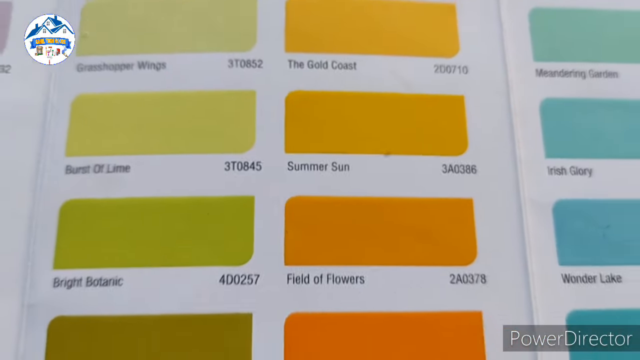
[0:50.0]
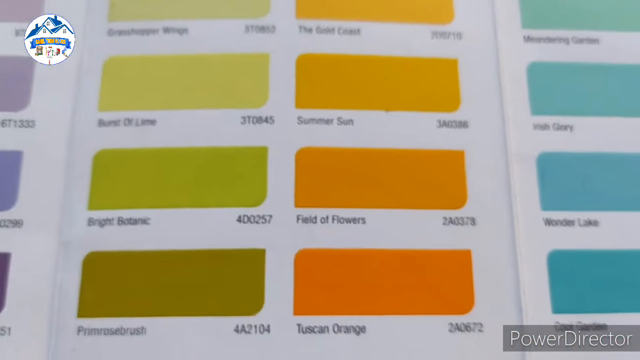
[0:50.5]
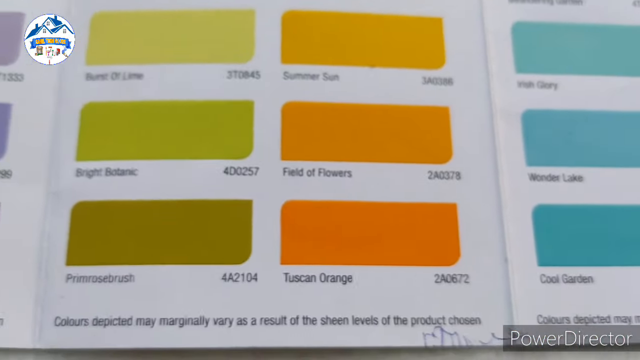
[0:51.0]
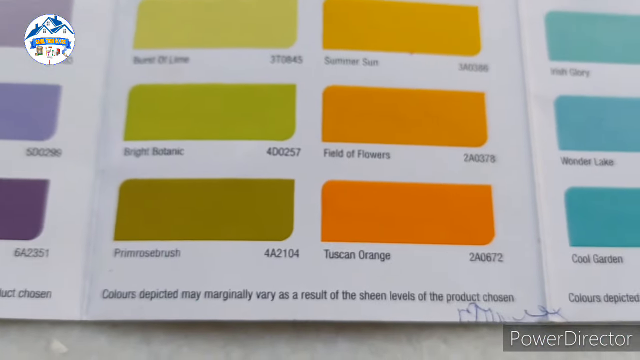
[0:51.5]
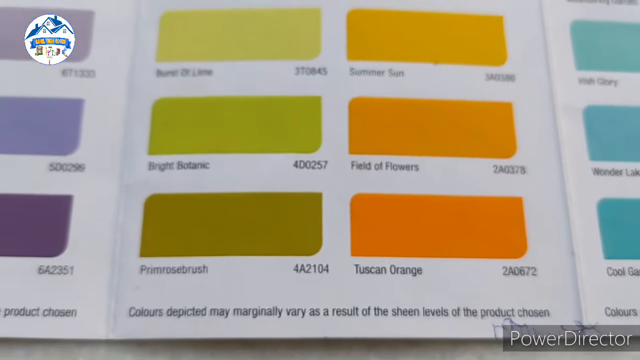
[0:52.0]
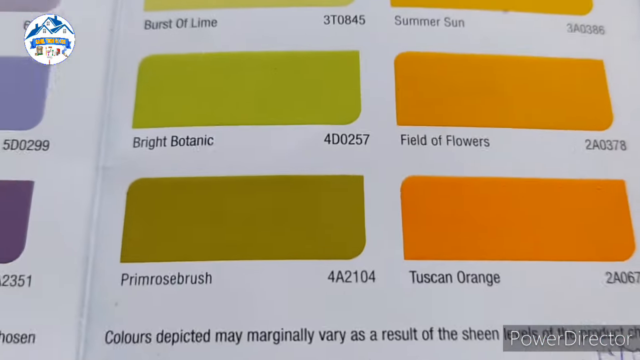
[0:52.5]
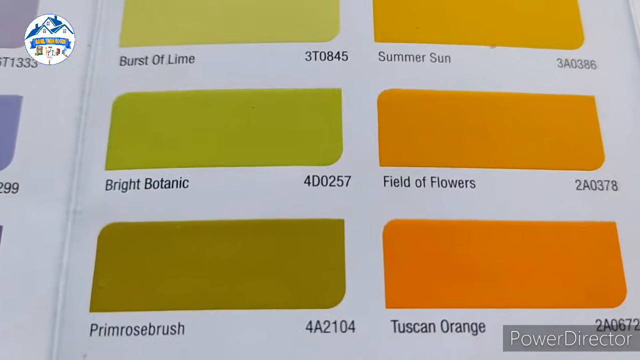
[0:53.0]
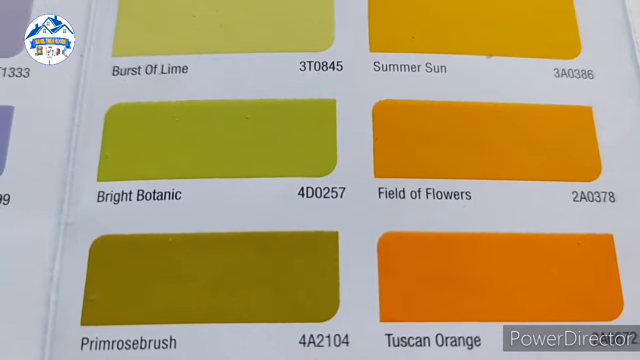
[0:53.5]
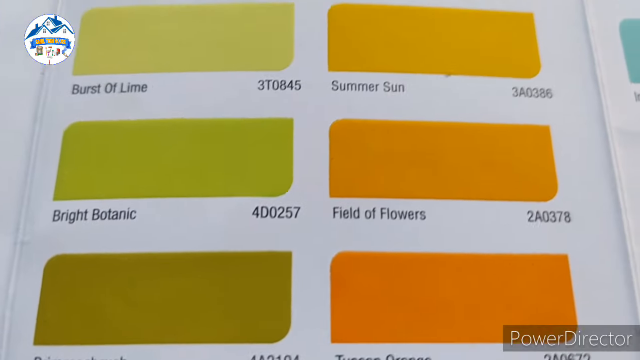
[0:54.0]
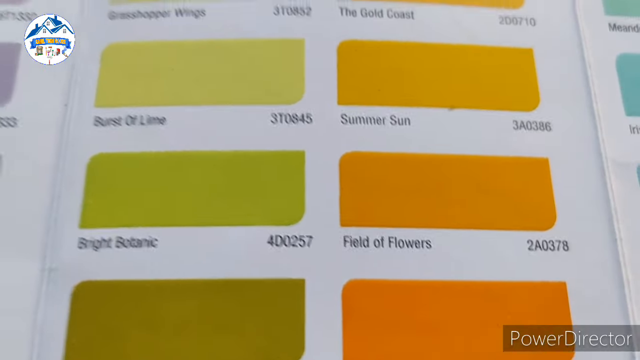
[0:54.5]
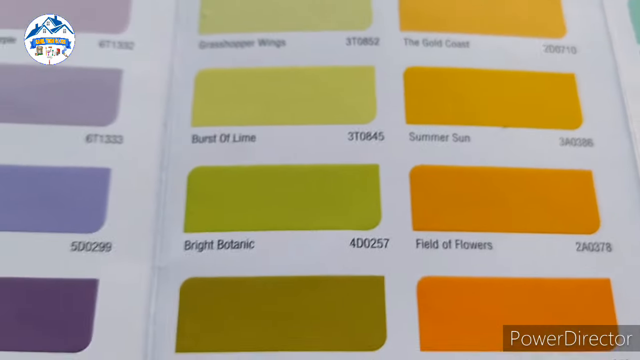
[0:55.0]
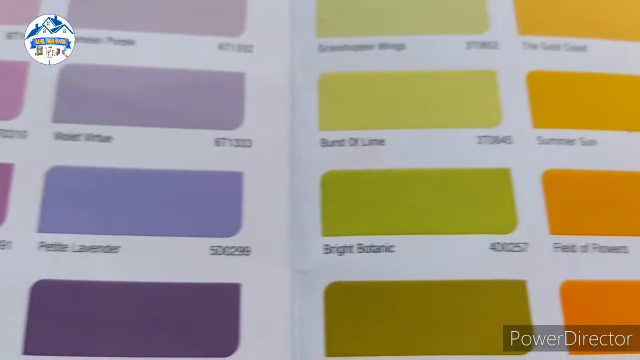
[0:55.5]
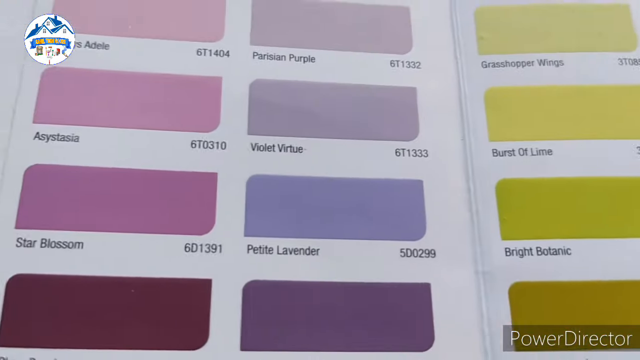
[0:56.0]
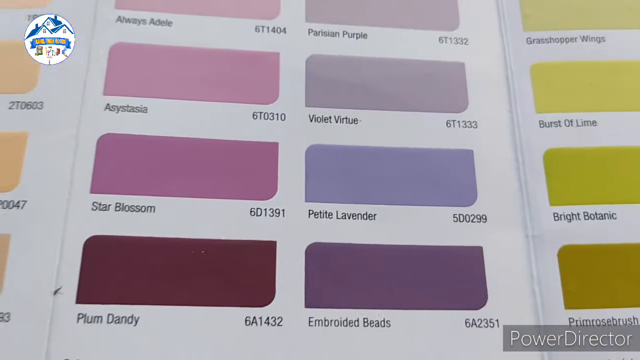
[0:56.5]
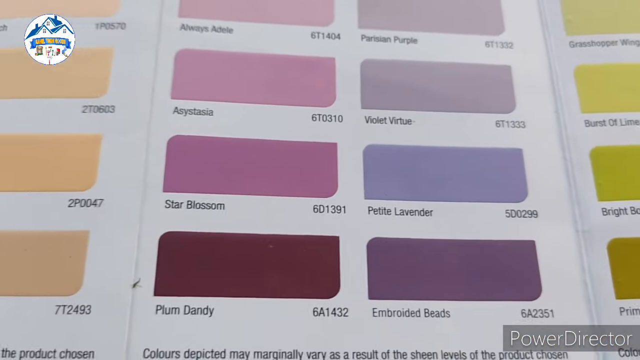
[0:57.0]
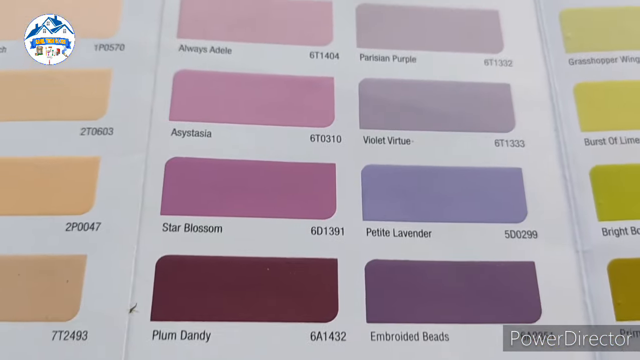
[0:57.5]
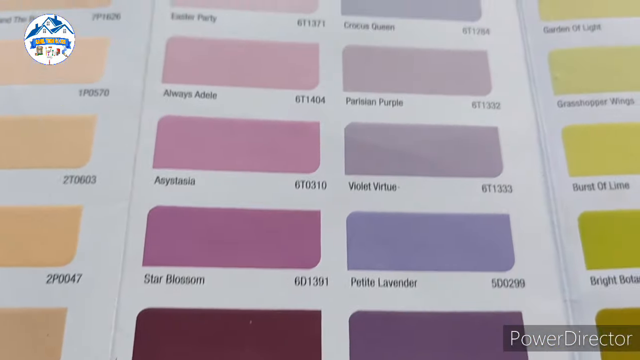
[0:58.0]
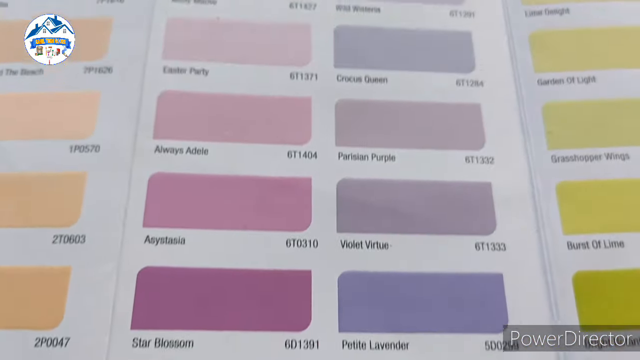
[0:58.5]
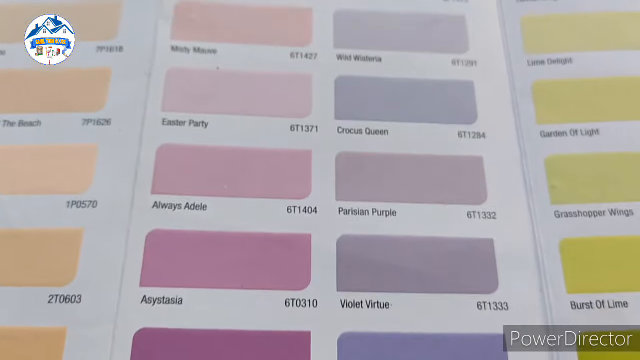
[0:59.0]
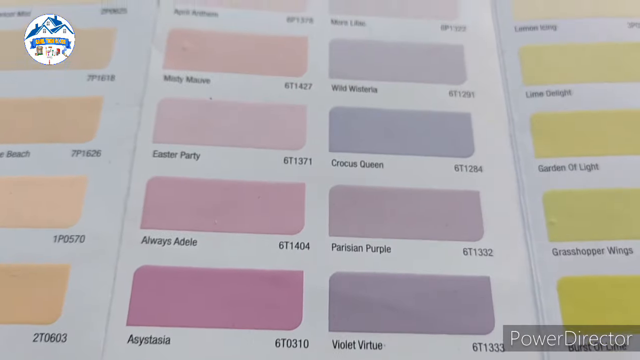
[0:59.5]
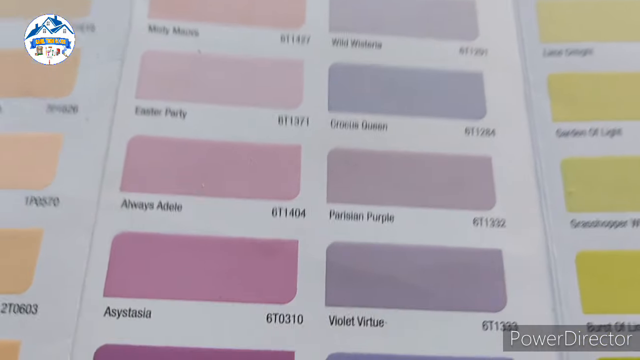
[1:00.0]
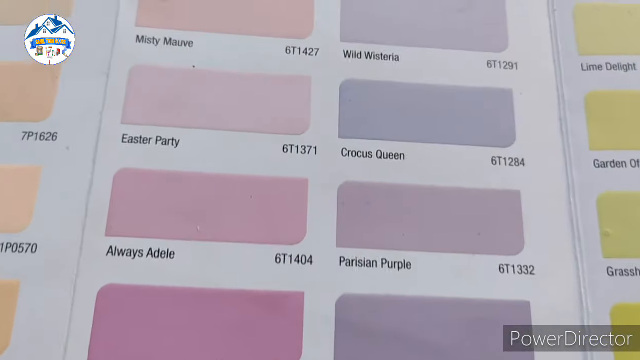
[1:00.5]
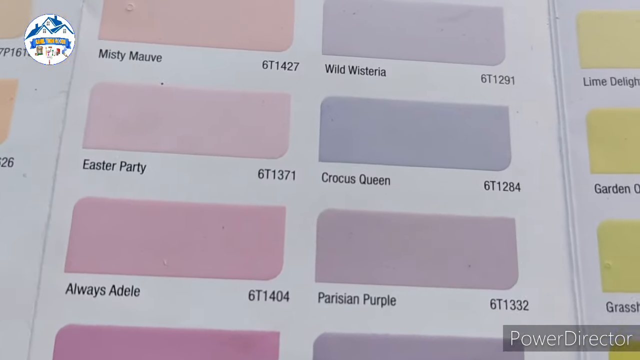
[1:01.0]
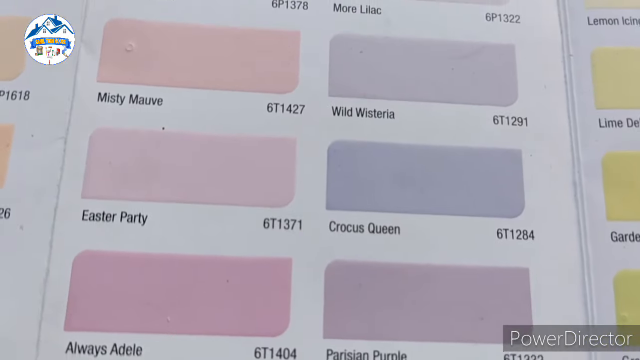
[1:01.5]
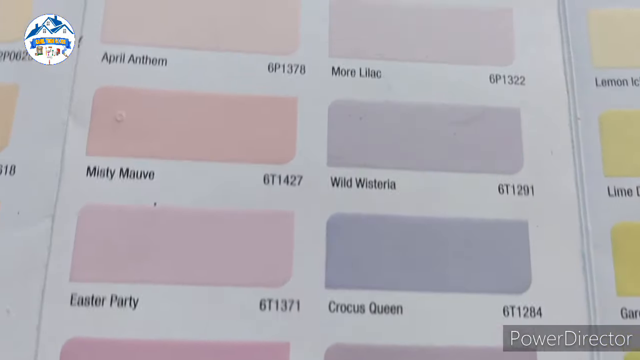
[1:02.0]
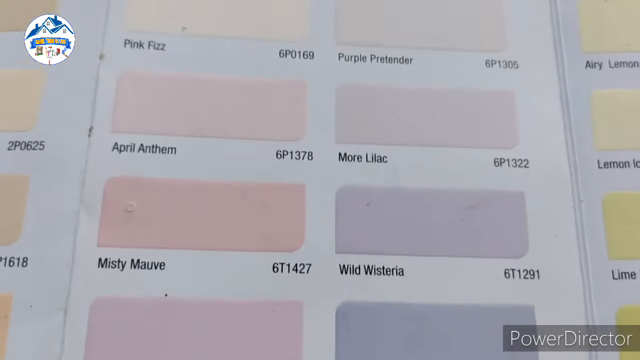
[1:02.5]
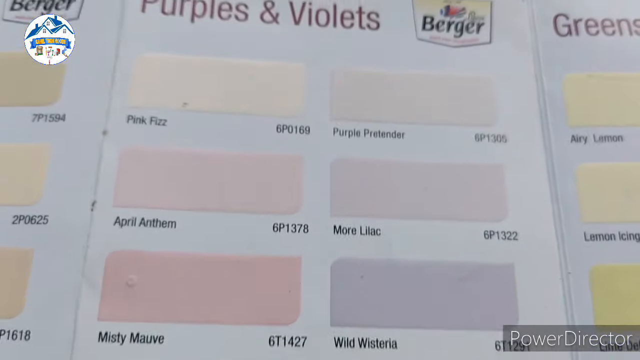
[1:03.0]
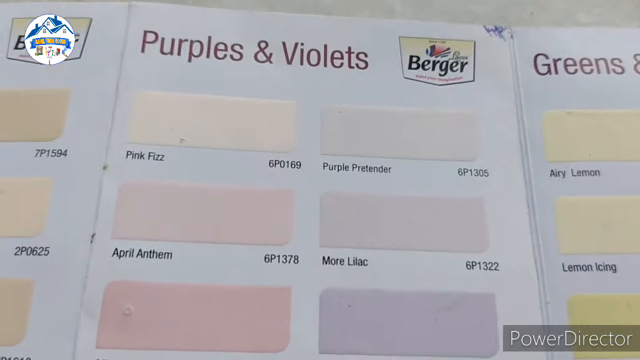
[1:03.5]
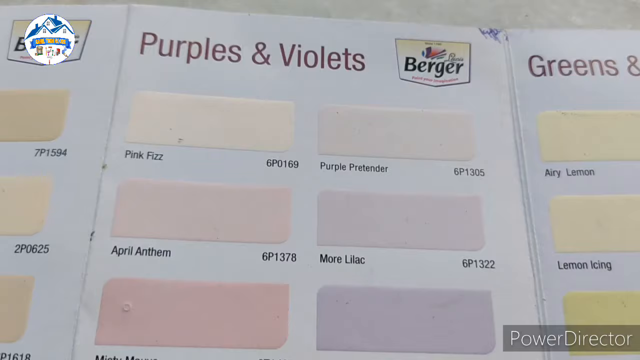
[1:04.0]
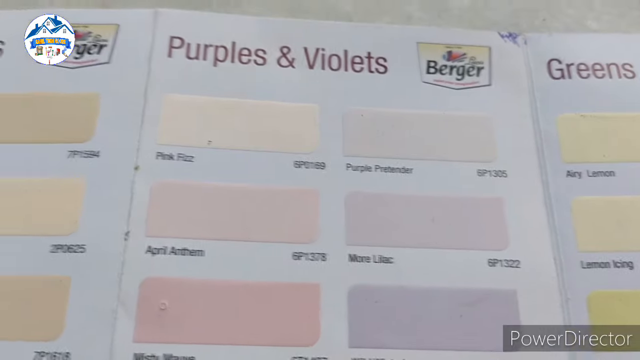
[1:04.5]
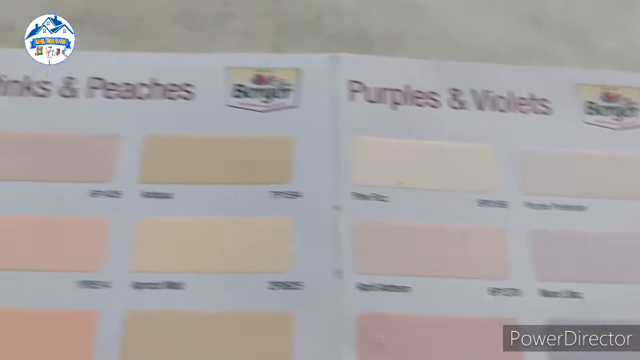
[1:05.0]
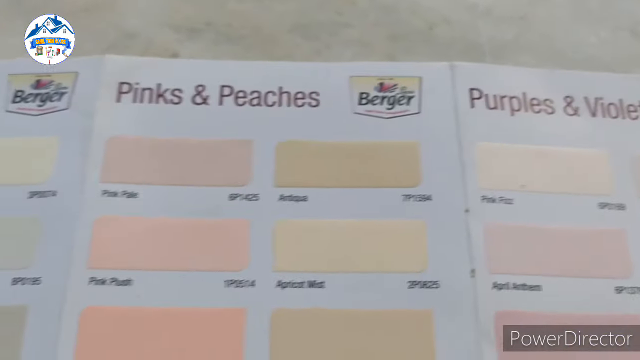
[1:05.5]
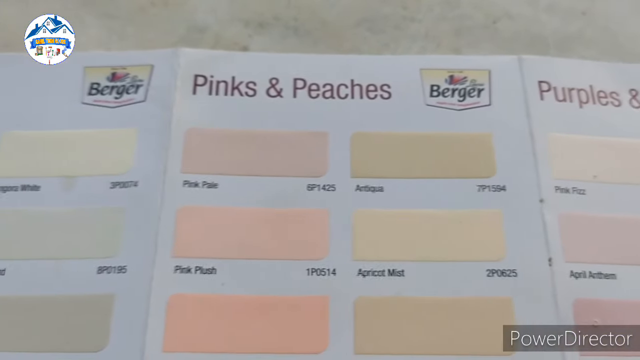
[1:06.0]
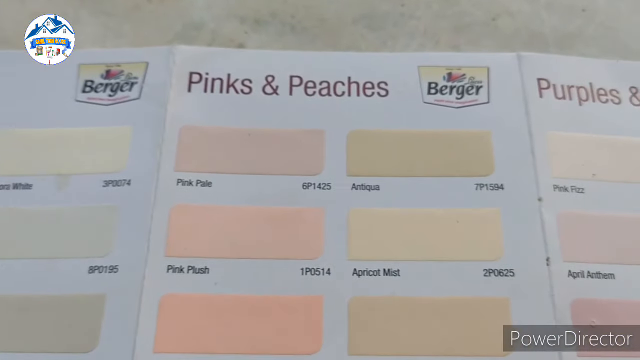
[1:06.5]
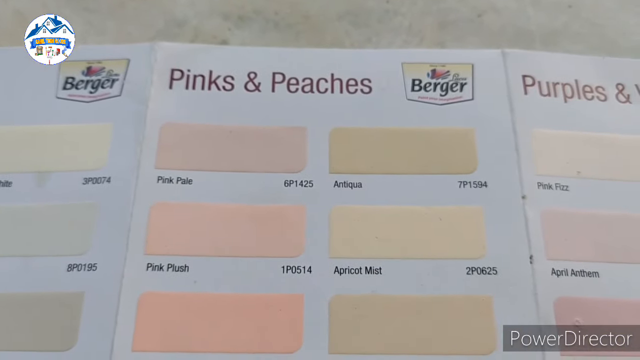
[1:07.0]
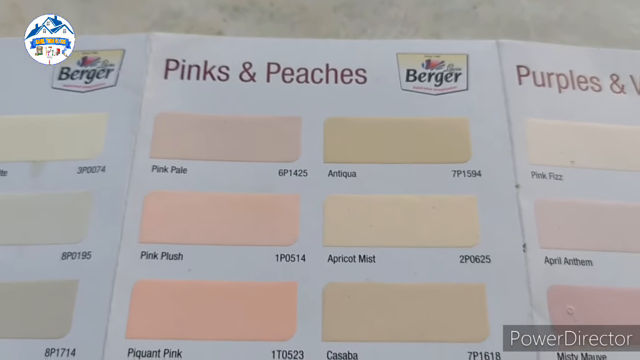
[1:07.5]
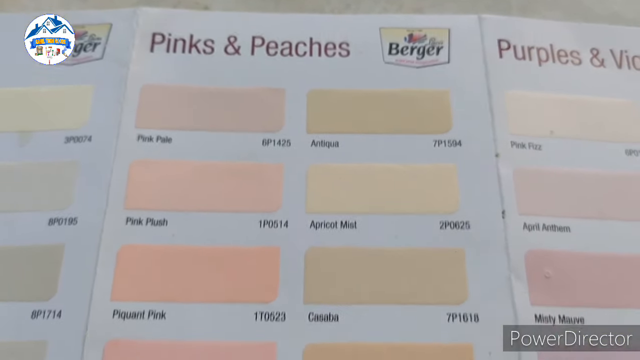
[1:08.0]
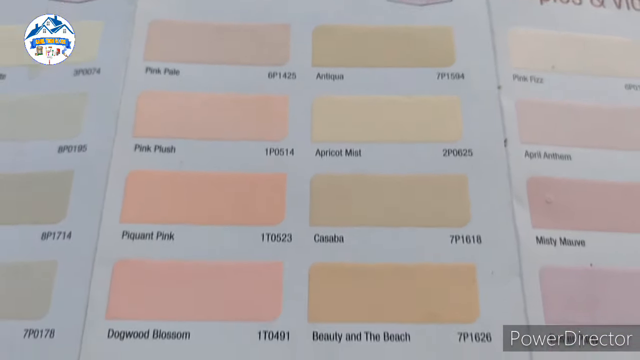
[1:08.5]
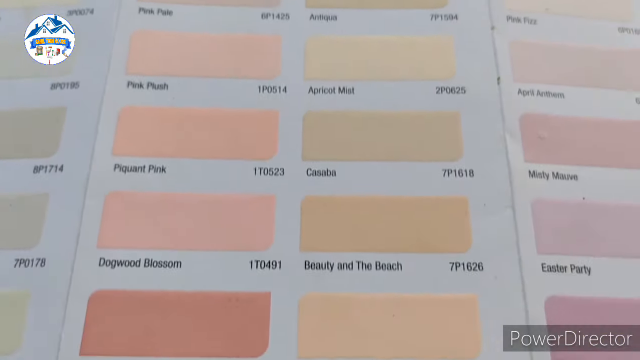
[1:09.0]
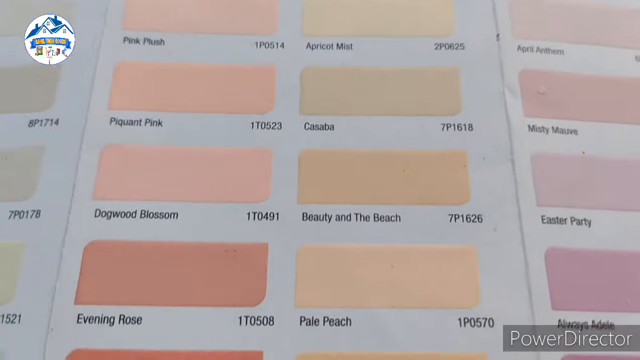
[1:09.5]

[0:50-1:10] A variety of orange and green-pink paint samples with different names is shown, and the view zooms in on a few at the very bottom. It then moves to the next section, Purples and Violets, with colors such as April Anthem, a more lilac shade, and Pink Fizz, mostly lighter shades of purple and pink. The samples are on a white background in what appears to be a store, or maybe on a counter that appears to be white. The next section reads "Pinks and Peaches" and has what seem to be light pink colors and some peach. Each sample has a separate number on the right side, and one of the names is Always Adele; the range is seemingly mostly light colors.